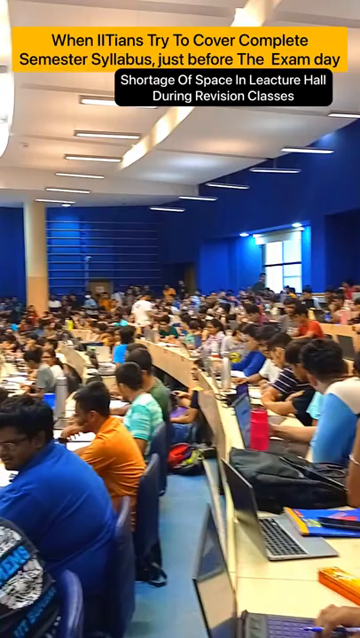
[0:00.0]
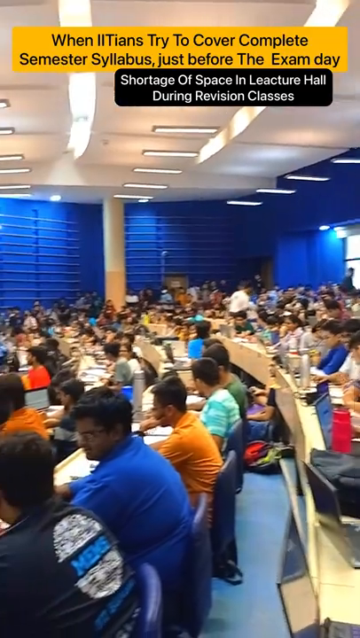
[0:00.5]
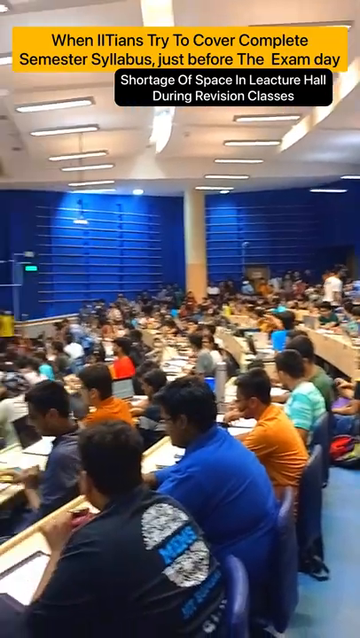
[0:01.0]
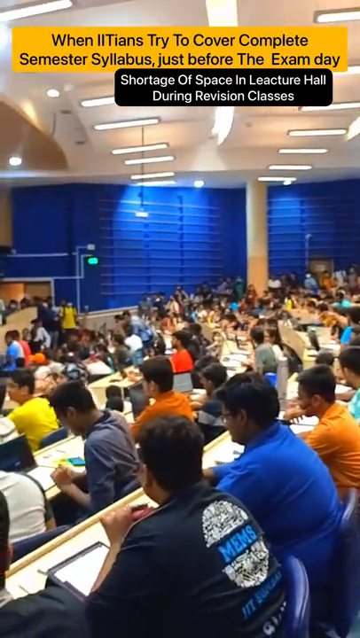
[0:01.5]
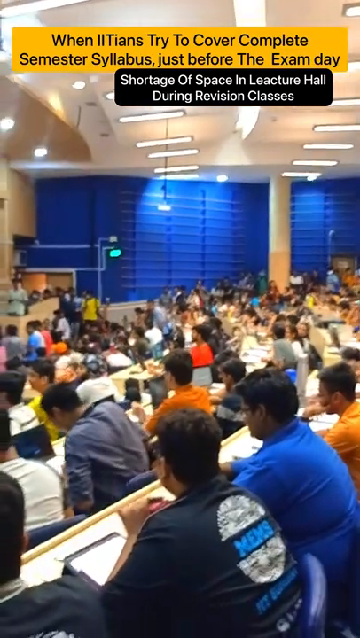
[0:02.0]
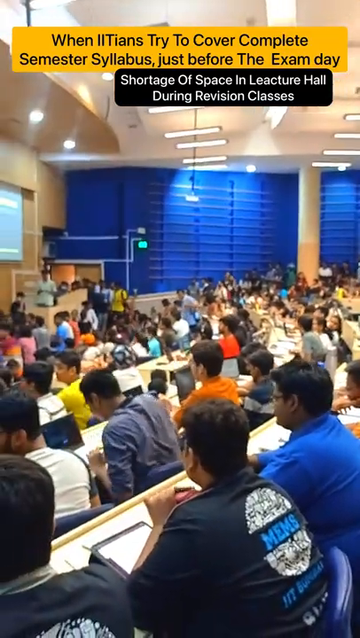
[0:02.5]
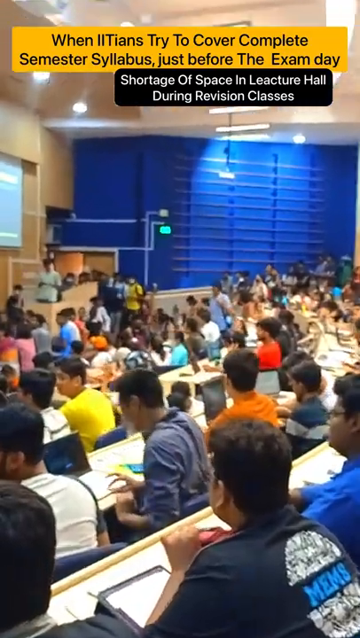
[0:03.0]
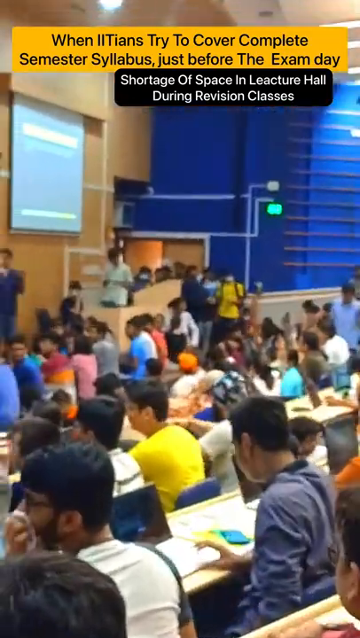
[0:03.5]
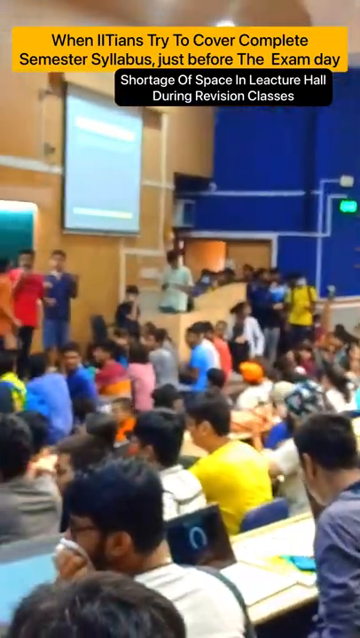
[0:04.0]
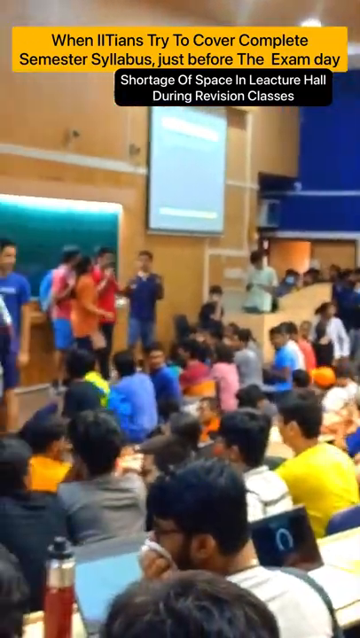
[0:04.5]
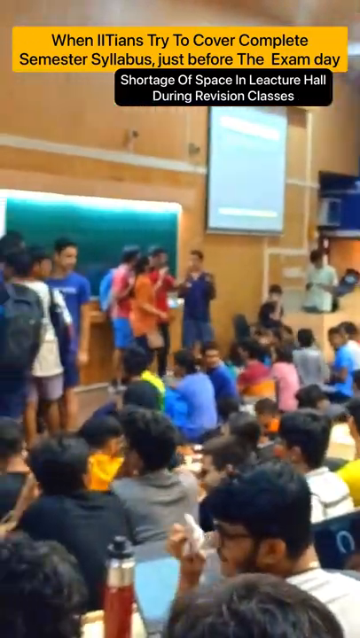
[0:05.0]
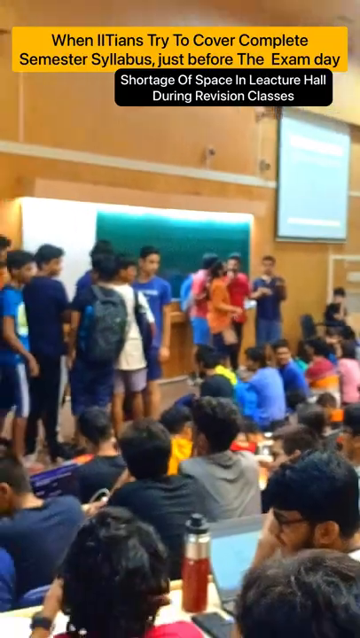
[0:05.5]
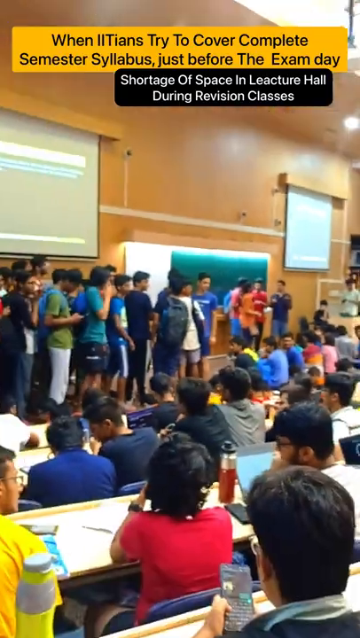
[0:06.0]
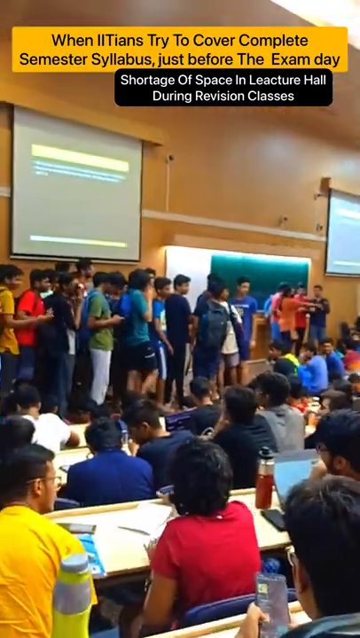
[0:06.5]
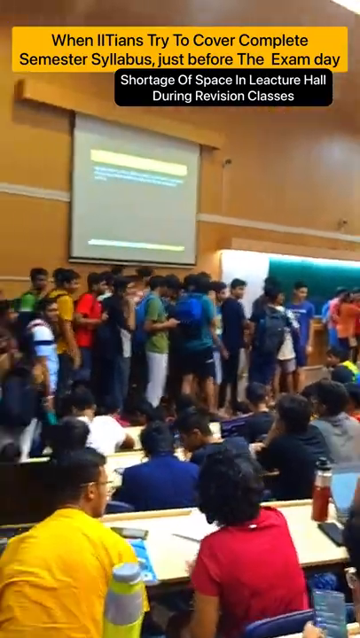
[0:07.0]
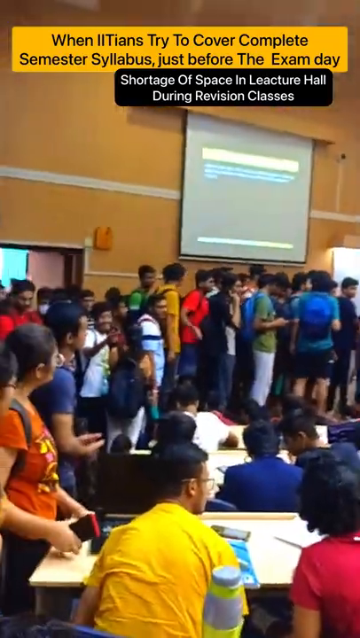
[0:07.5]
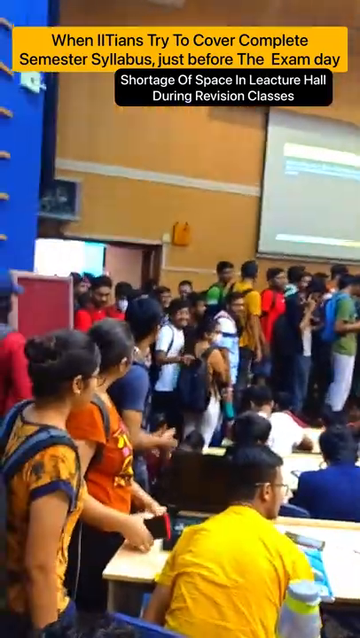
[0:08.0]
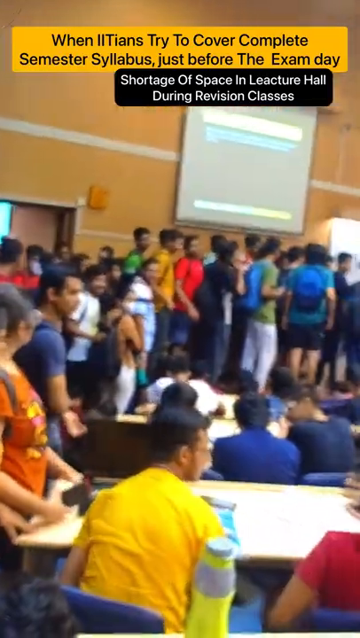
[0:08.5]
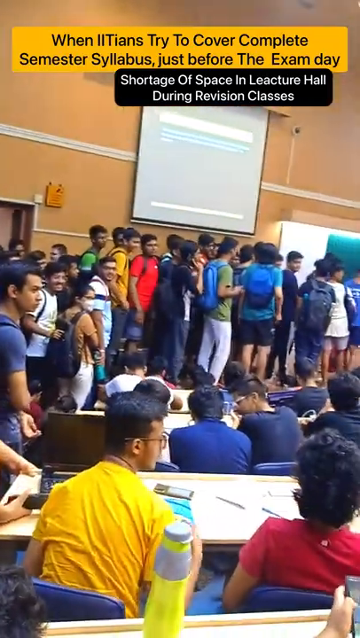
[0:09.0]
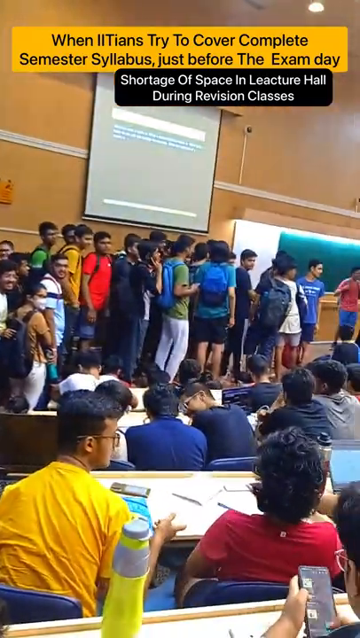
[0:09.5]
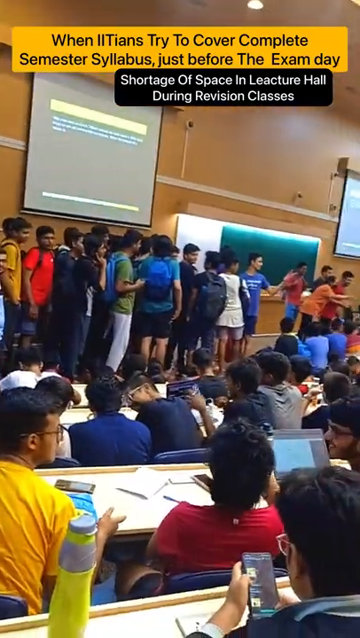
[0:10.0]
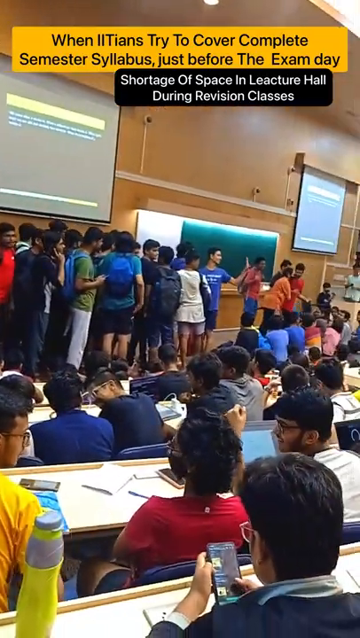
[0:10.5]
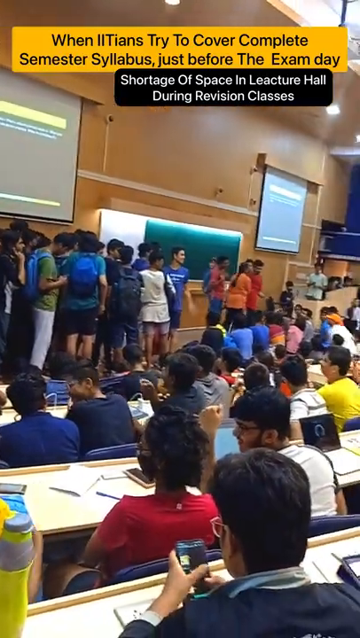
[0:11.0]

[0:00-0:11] The camera pans across a crowded lecture hall in Bombay. A pull-down screen is at the front of the hall, and the room has a classic theater-type step-down layout, with desks that have seats behind them. Every seat is full. On the desks are computers, water bottles and coffee cups, and some people are looking at their phones. Students stand in the aisles on either side and at the front, showing that the lecture room isn't big enough for the number of students in the class. The people are predominantly male; there are a few females, who are standing, while most everyone sitting down is male. Everybody is dressed in casual clothes, and the average age seems to be late teens to early 20s. A few of the people standing up have backpacks.